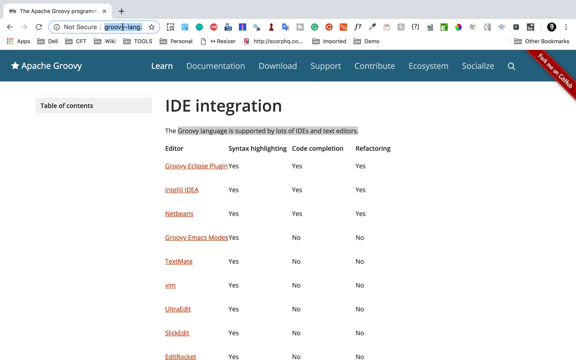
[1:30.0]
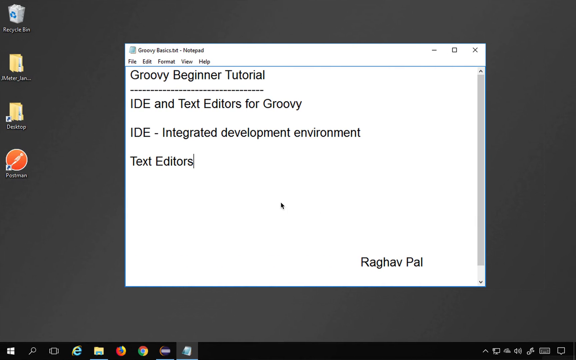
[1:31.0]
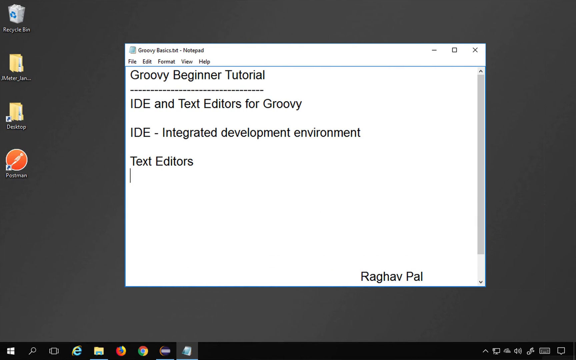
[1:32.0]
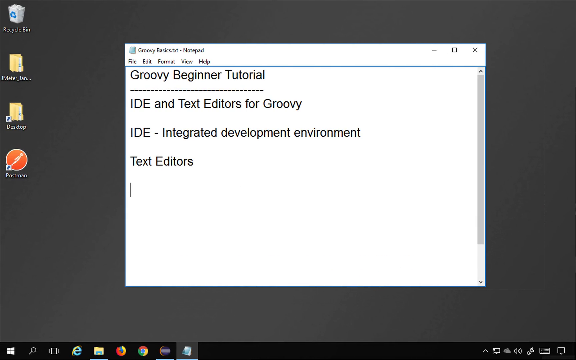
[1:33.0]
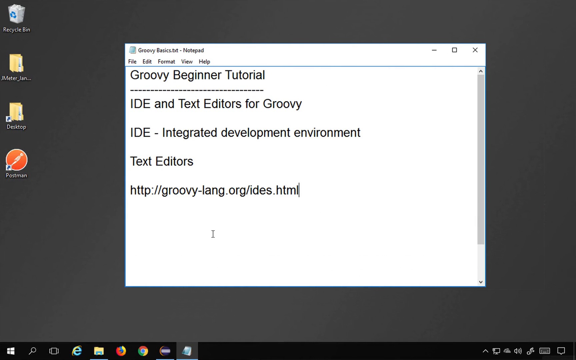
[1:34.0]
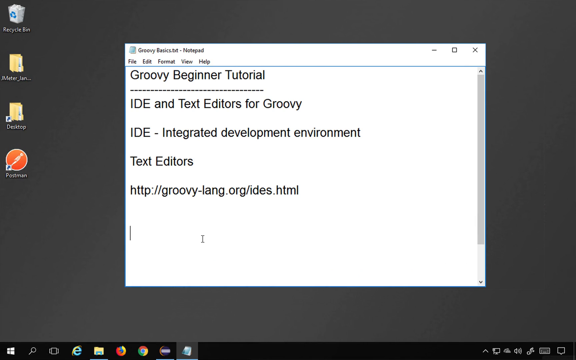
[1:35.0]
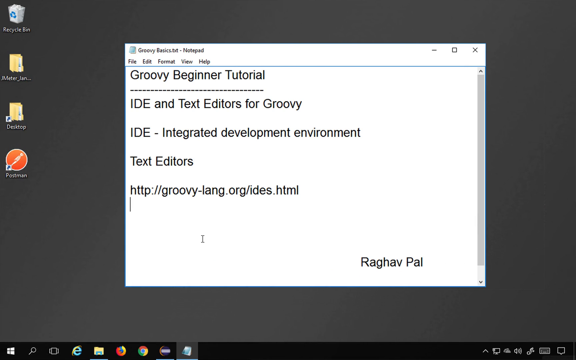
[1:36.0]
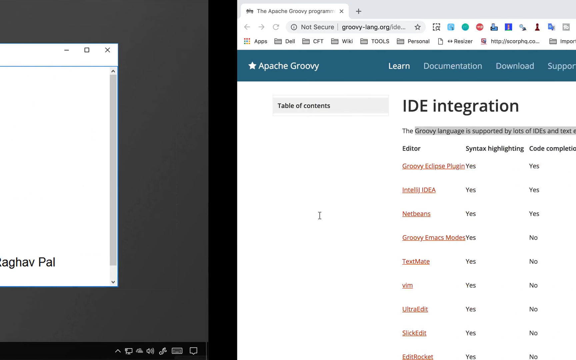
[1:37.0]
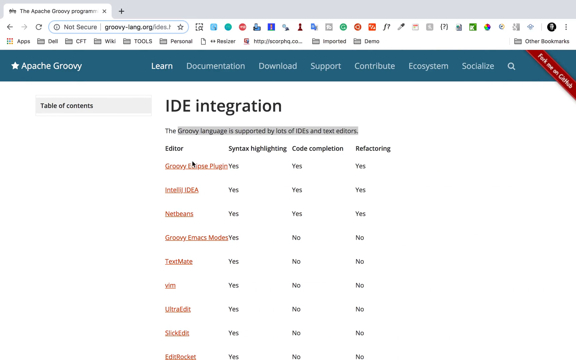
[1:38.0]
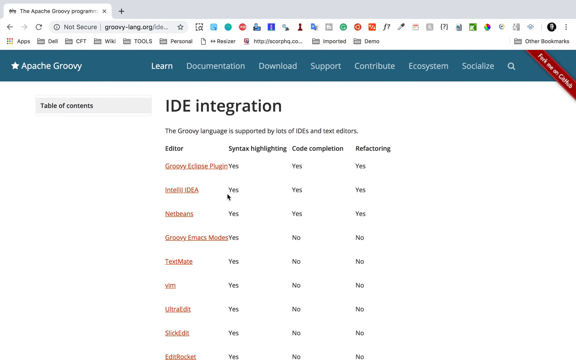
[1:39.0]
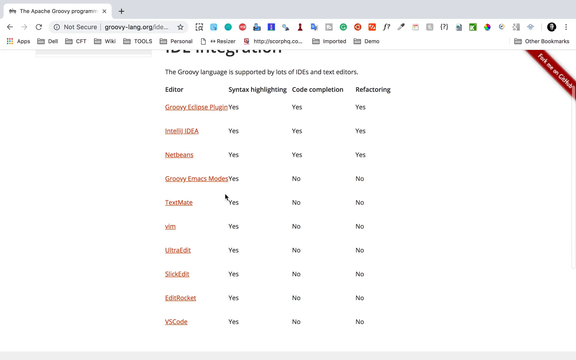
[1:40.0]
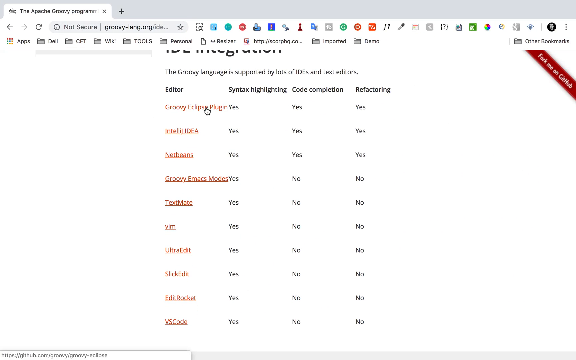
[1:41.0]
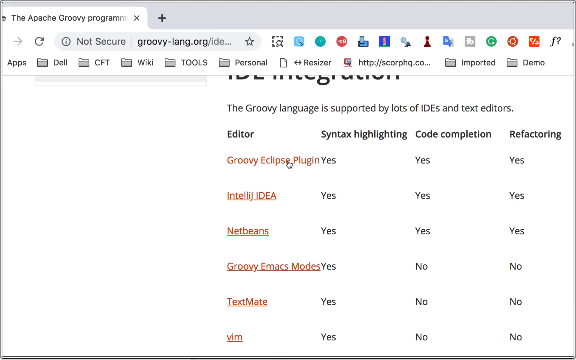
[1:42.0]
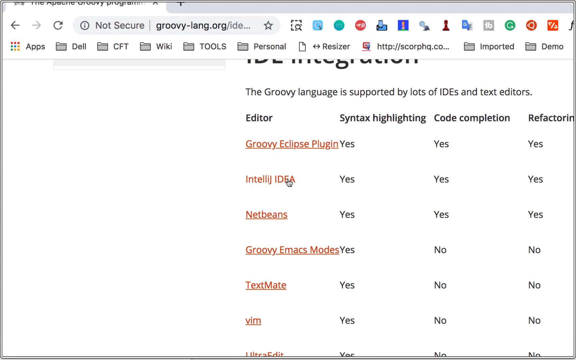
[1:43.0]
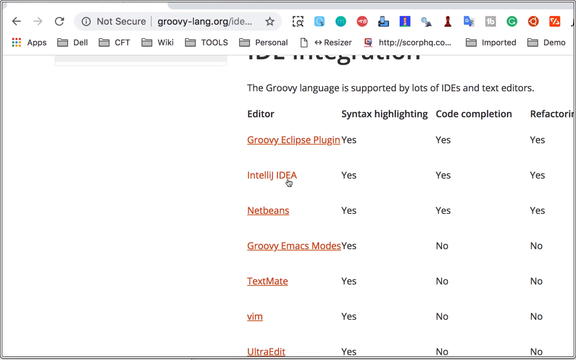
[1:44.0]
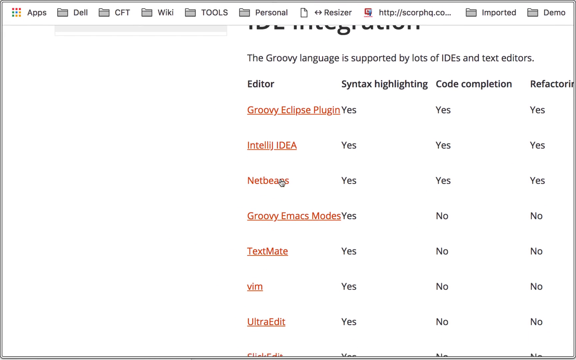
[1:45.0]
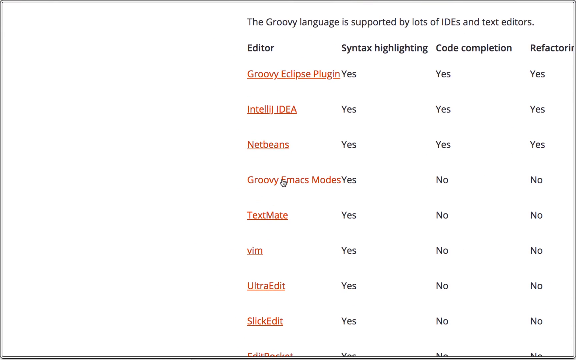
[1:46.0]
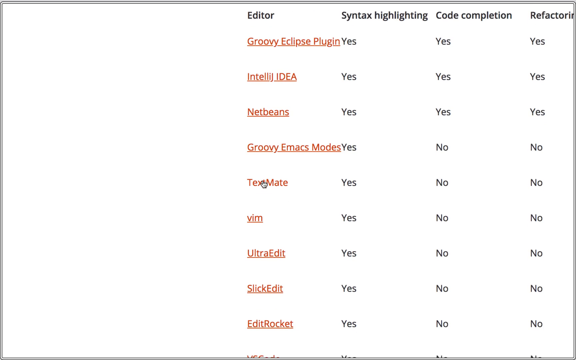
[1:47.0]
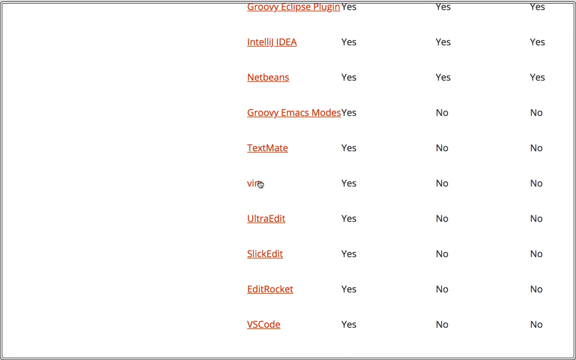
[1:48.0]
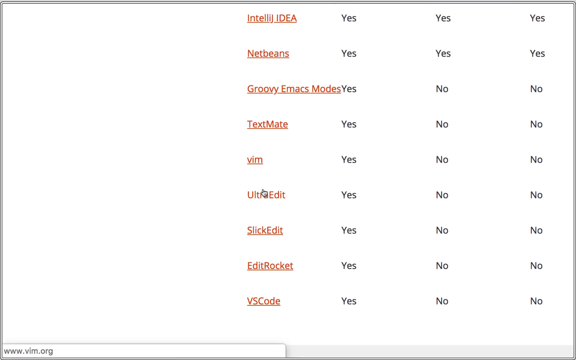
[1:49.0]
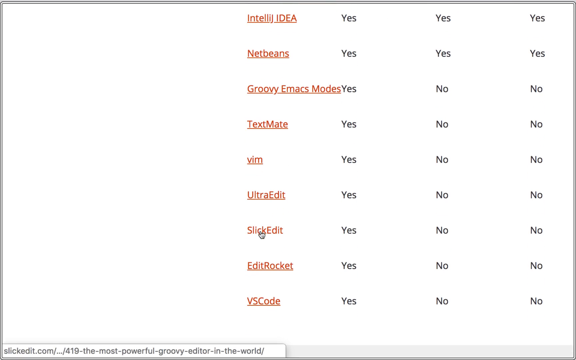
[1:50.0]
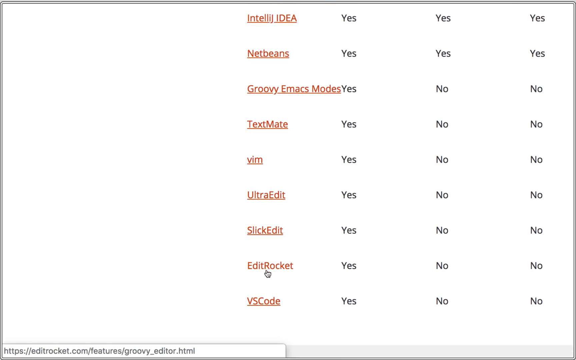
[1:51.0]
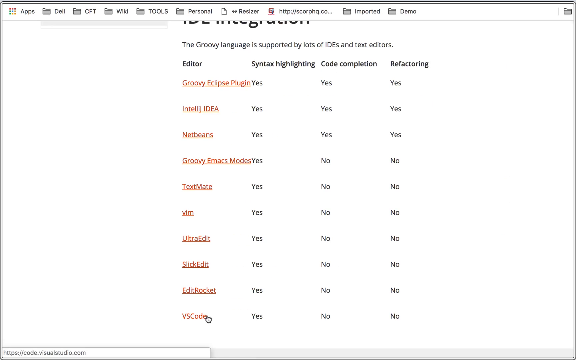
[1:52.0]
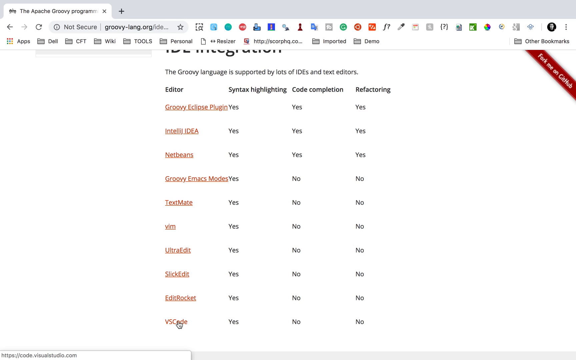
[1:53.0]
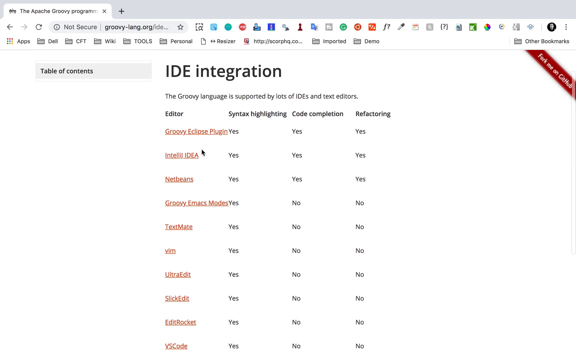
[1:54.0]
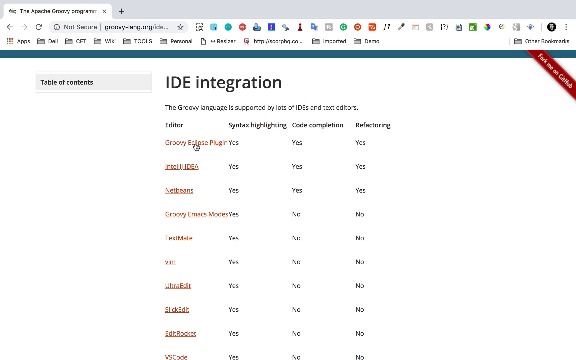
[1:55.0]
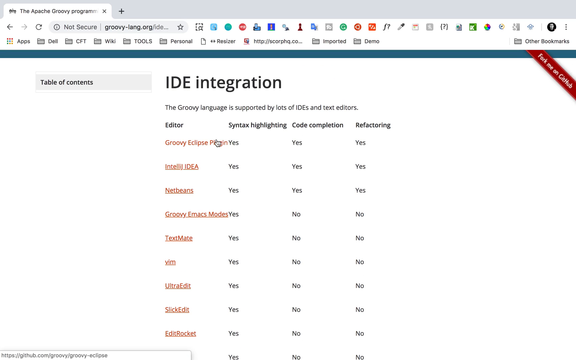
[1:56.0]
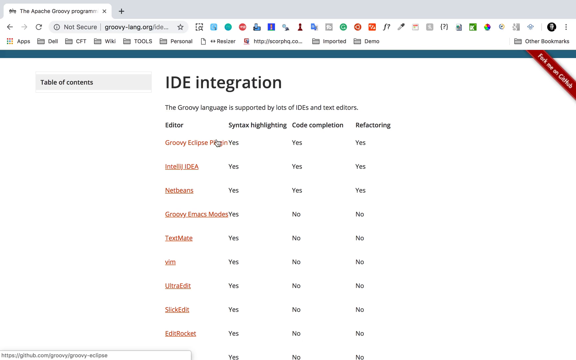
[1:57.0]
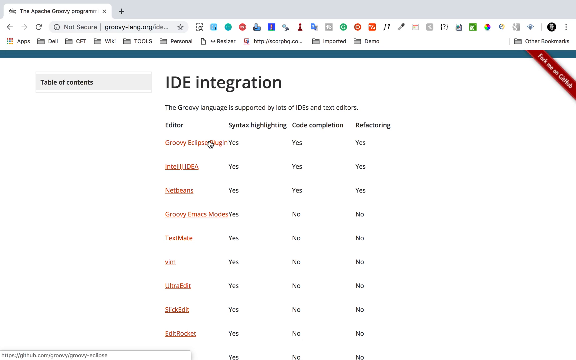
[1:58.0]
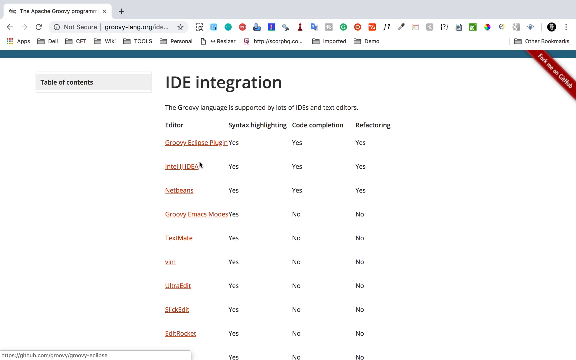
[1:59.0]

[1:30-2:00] A PC monitor shows the Apache Groovy web page, with tabs in the blue border at the top for Learn, Documentation, Download, Support, Contribute, Ecosystem and Socialize, followed by a magnifying glass for search. Below, in the gray body, is a Table of Contents box, and the page is at the IDE integration section, which reads "the Groovy language is supported by lots of IDEs and text editors". It lists eight editors vertically, with sections for syntax highlighting, code completion and refactoring, each marked yes or no depending on whether the editor can do them. The video transitions to a smoky gray screen with four shortcuts and a notepad pop-up box in the middle reading "Groovy beginner tutorial", "IDE and text editors for Groovy", "IDE-IntegratedDevelopmentEnvironment" and "Text Editors", with the name Raghav Pal at the bottom right. The video then transitions back to the IDE integration page, which scrolls up as the person searches the section until they stop.